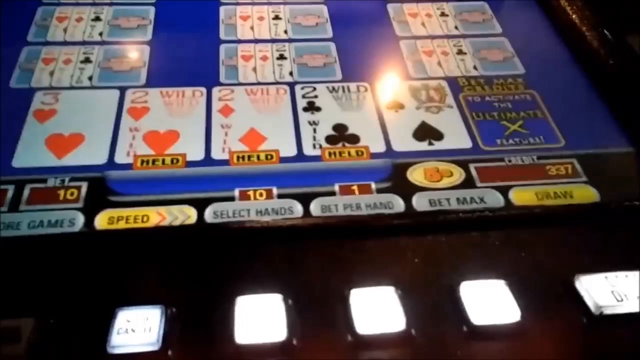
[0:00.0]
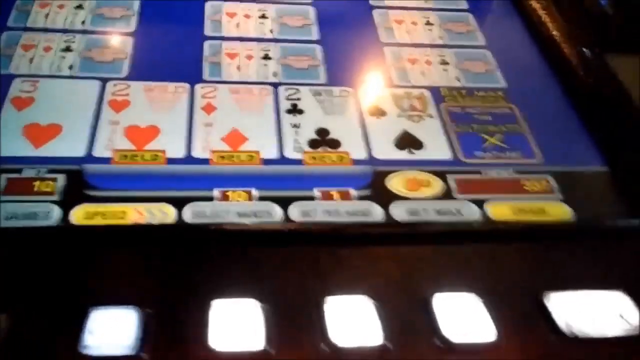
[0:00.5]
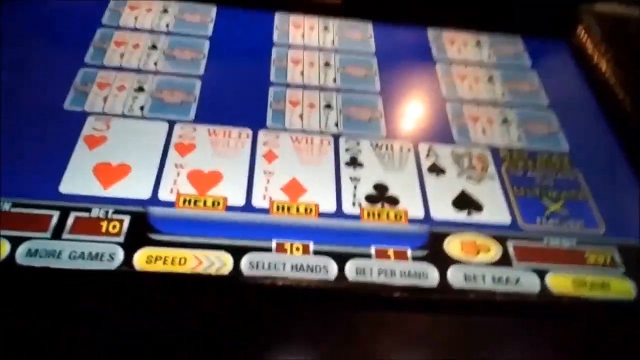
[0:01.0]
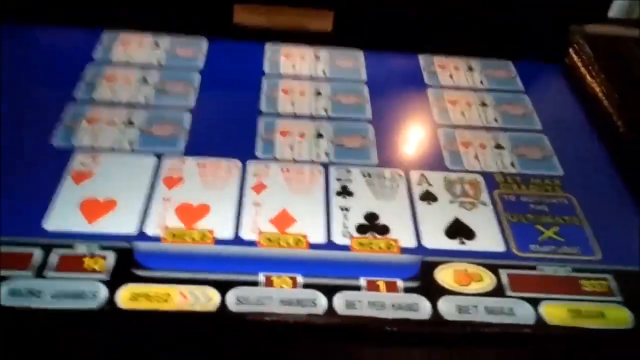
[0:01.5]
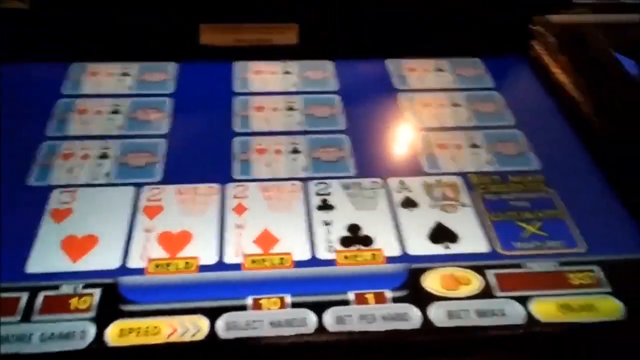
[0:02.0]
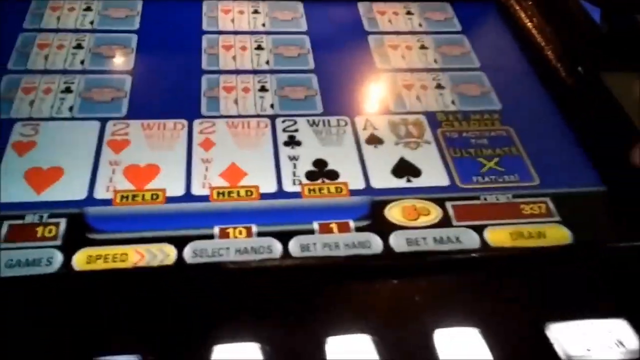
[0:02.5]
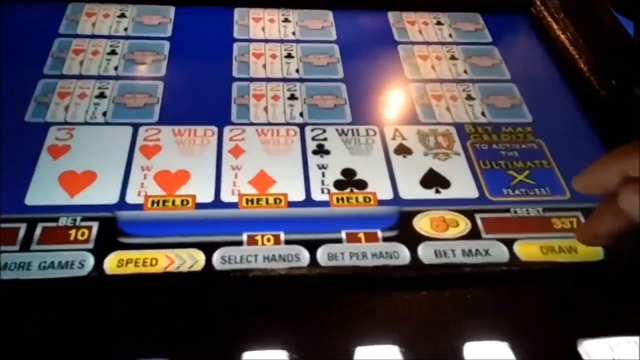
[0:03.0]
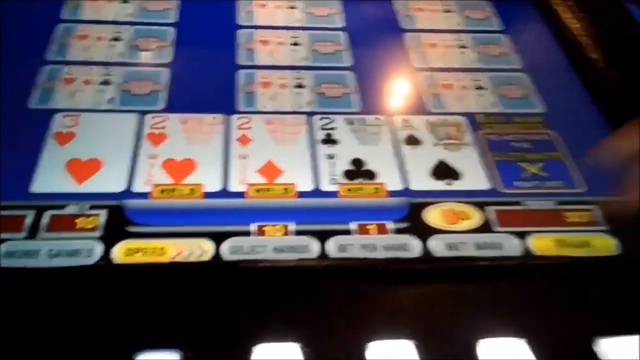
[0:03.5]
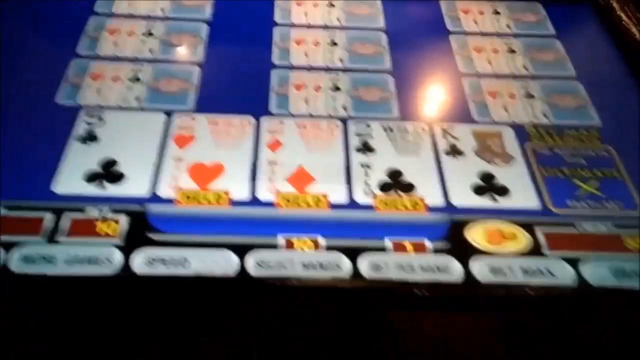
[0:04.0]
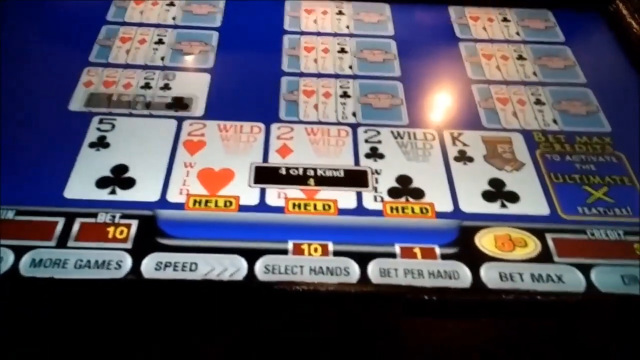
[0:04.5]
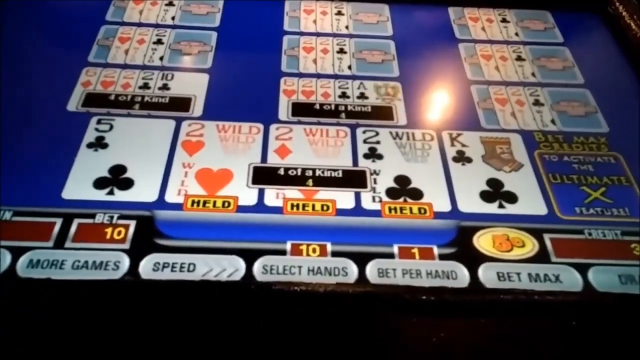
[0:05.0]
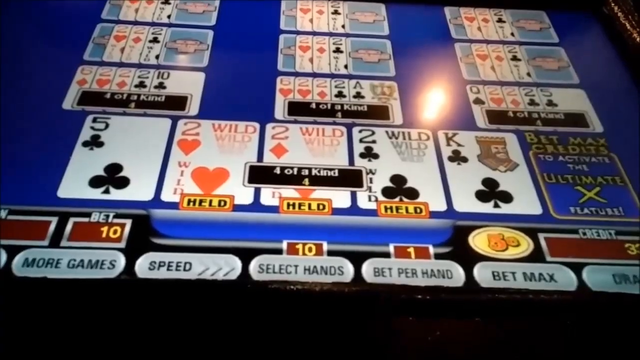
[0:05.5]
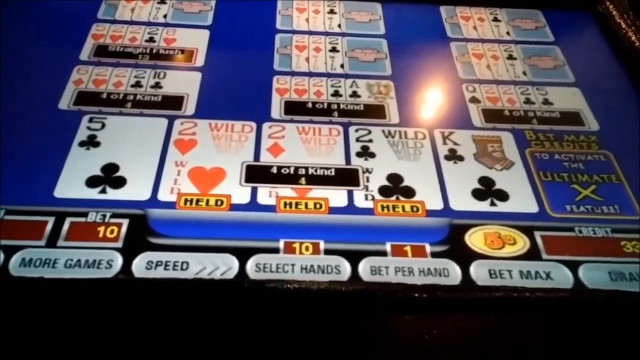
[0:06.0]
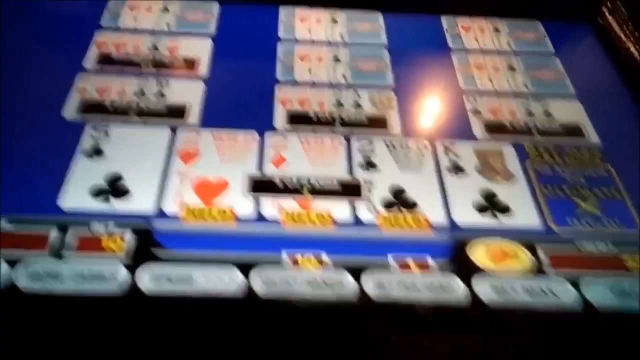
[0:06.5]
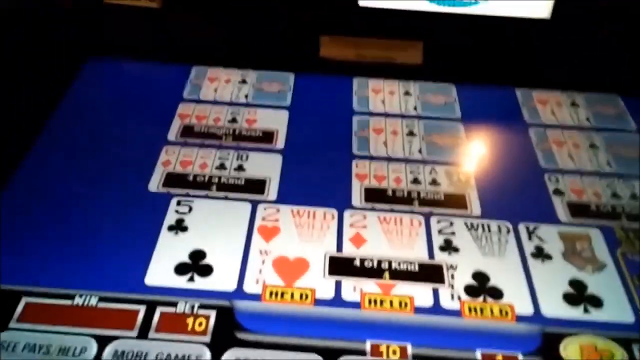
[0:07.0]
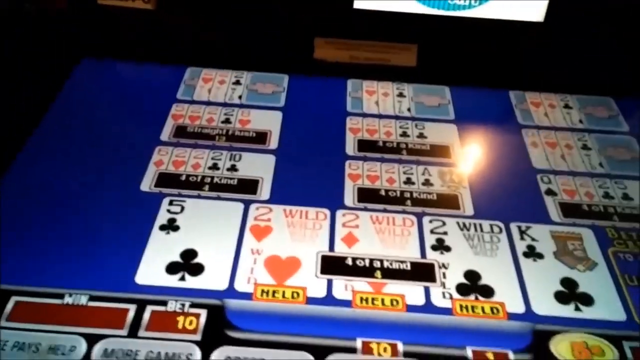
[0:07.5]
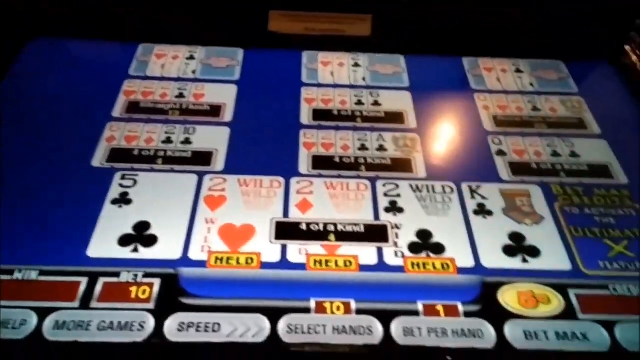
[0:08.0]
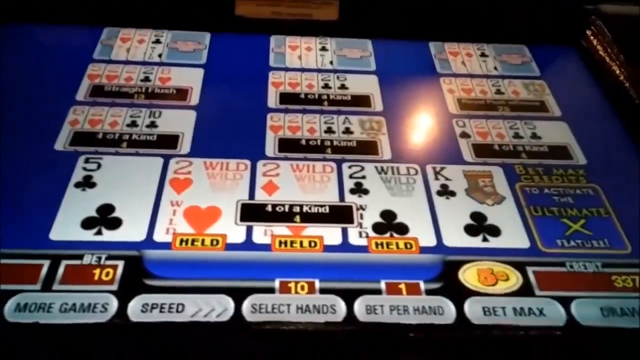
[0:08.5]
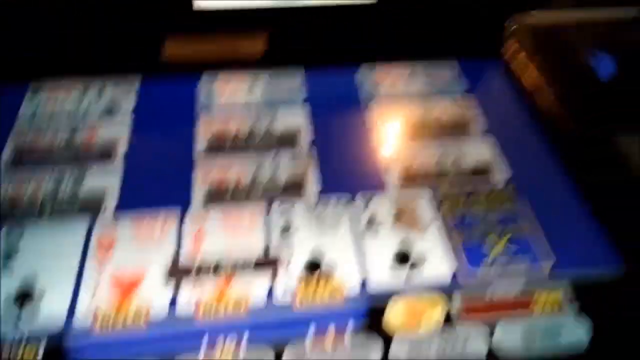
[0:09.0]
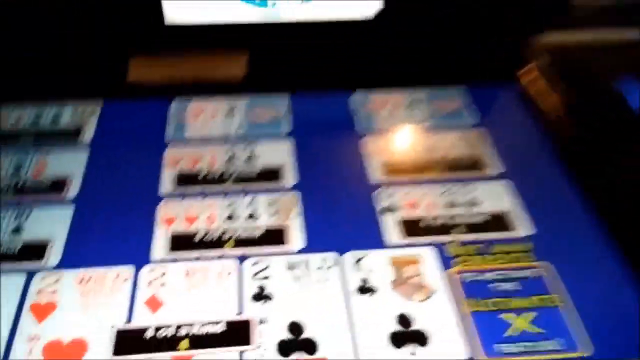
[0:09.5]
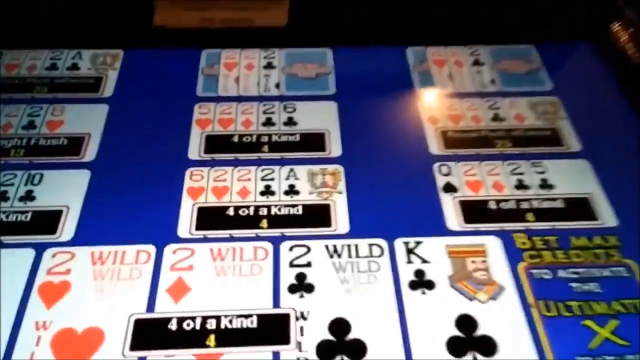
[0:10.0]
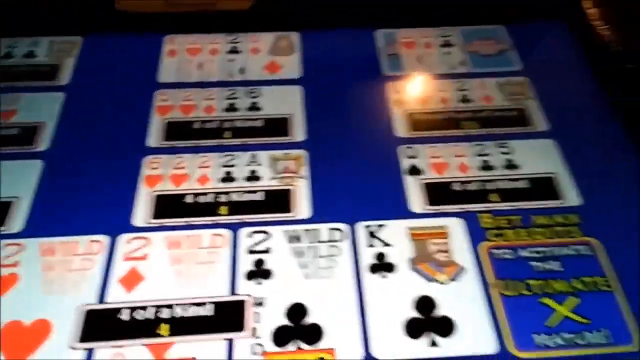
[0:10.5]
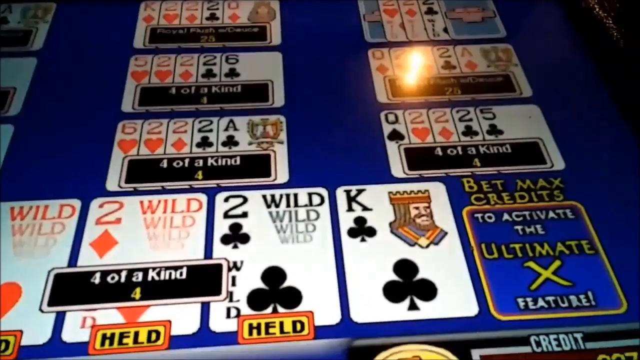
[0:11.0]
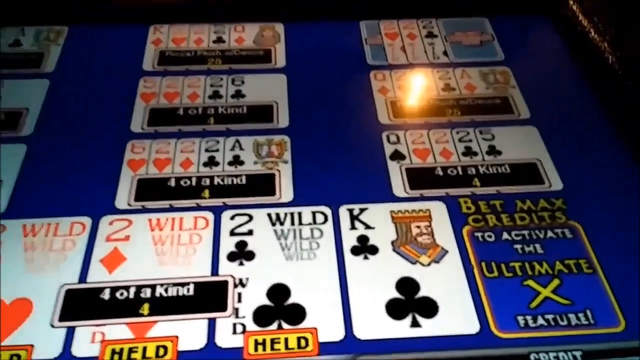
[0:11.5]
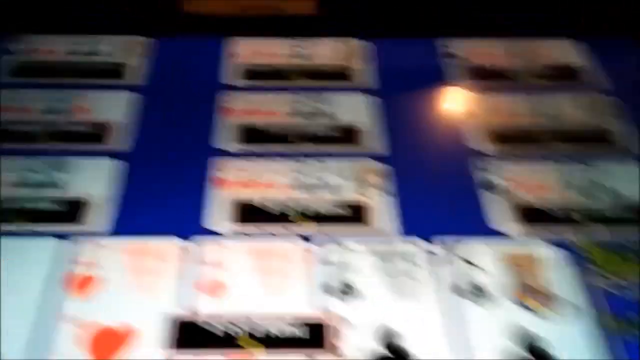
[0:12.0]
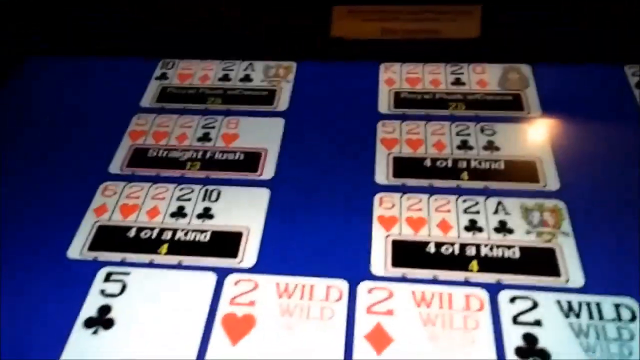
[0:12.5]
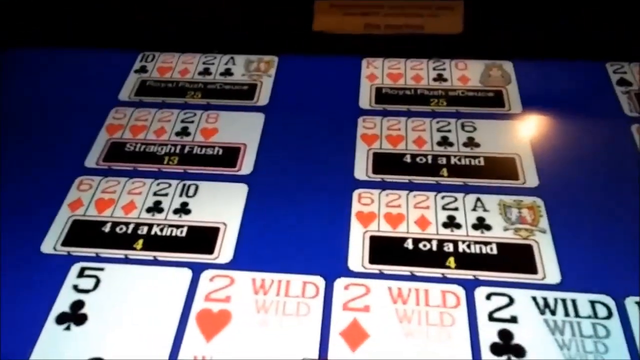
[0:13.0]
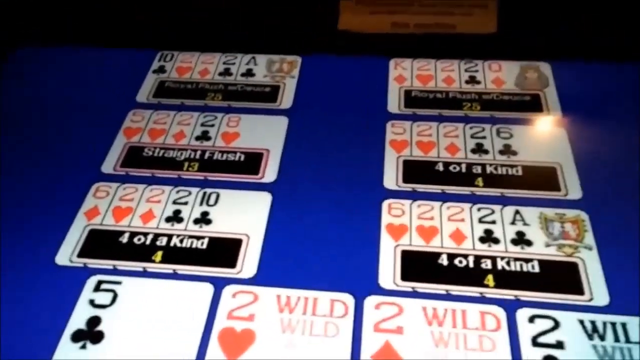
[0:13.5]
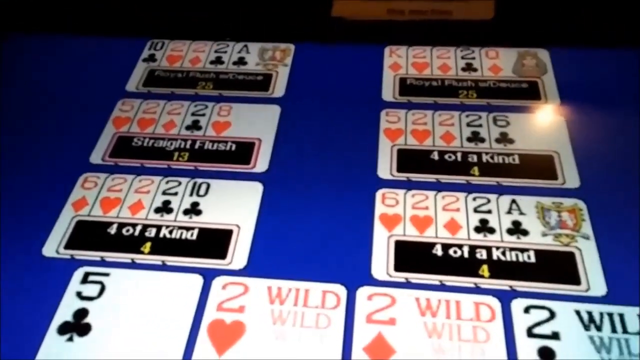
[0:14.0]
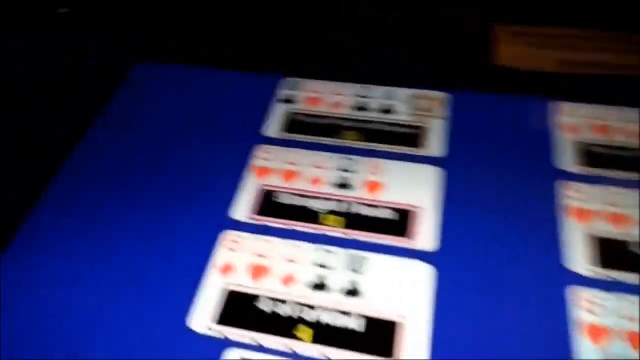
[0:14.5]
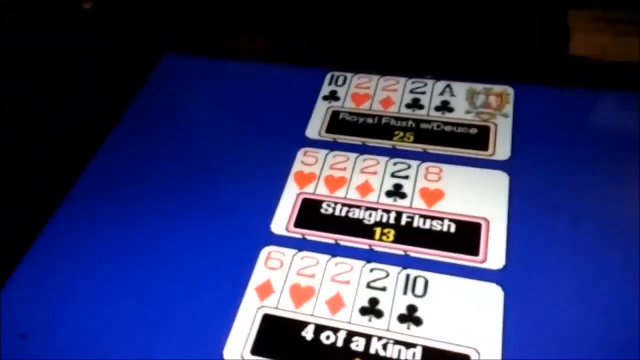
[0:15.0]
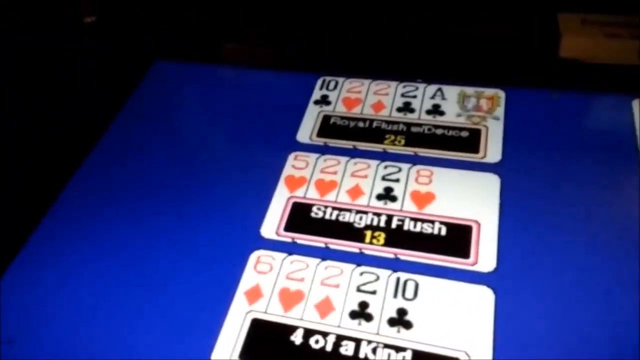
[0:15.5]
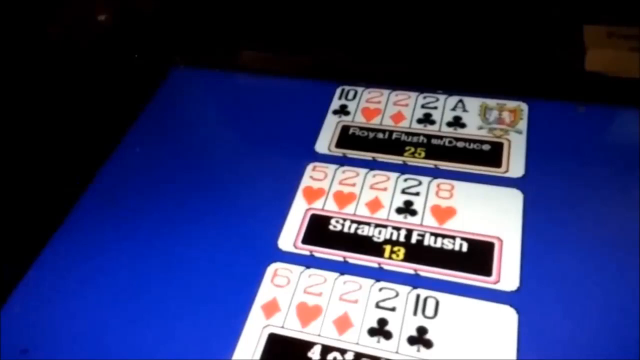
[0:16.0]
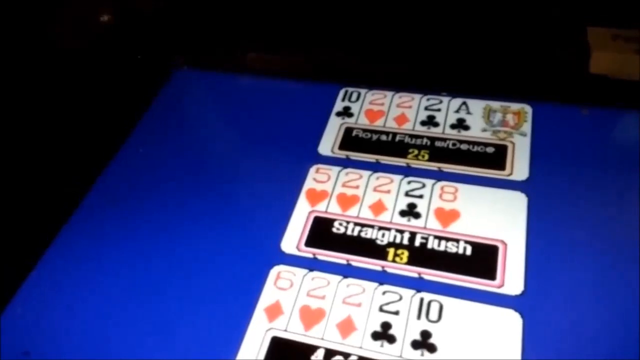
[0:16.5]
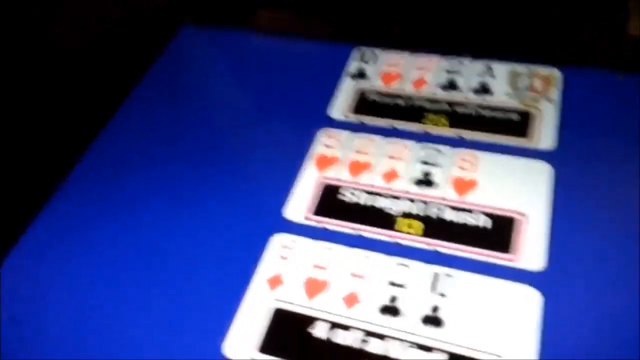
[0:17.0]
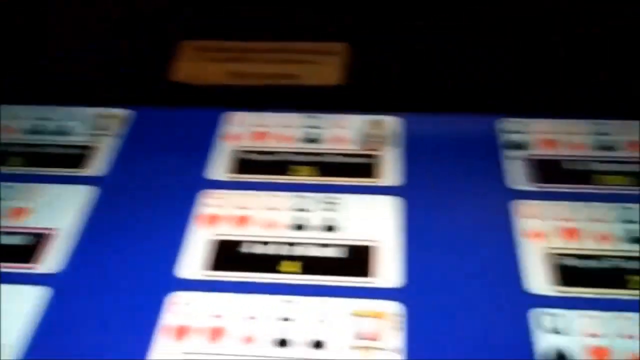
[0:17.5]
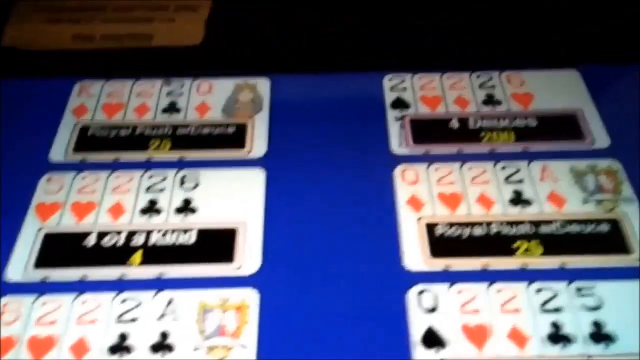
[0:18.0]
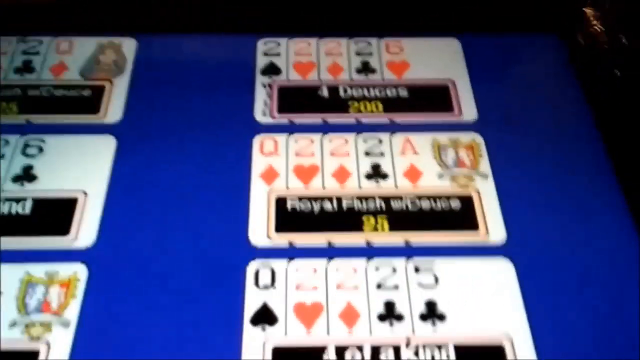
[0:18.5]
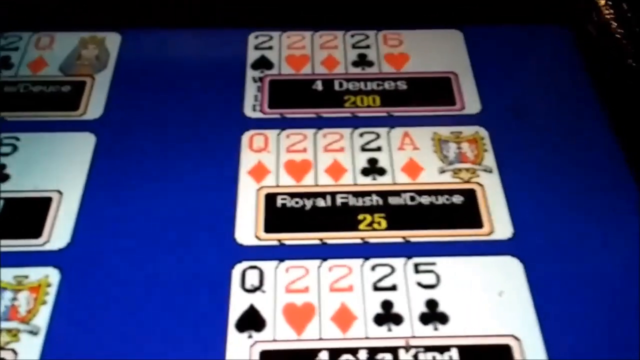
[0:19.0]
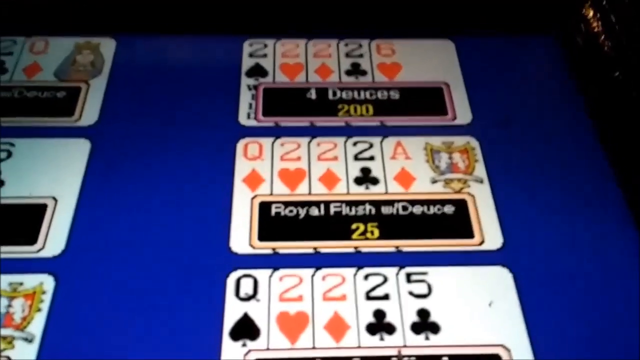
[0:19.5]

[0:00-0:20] The video opens on what appears to be an electric slot machine running a poker game. The hand in play holds the three of hearts, the two of hearts marked "wild", the two of diamonds marked "wild", the two of clubs marked "wild" and the ace of spades; the three twos are held. The person presses the start button at the bottom right and new cards are dealt, and it appears the other hands get cards too. The screen behind the cards is blue. To the right are bet max and the credits. There are nine other hands, presumably held by other people, and the person moves the camera to some of them, which are labeled "straight flush", "royal flush", "four of a kind", "royal flush with deuce" and others. Buttons along the bottom read "more games", "speed", "select hands", "bet per hand" and "bet max", with "draw" on a yellow button to the right. The credit shows 337, and the bet column on the left side shows 10.